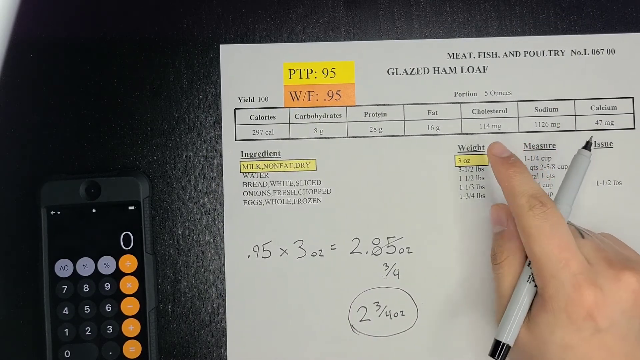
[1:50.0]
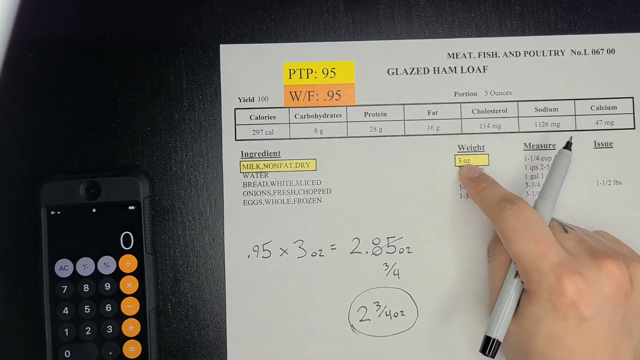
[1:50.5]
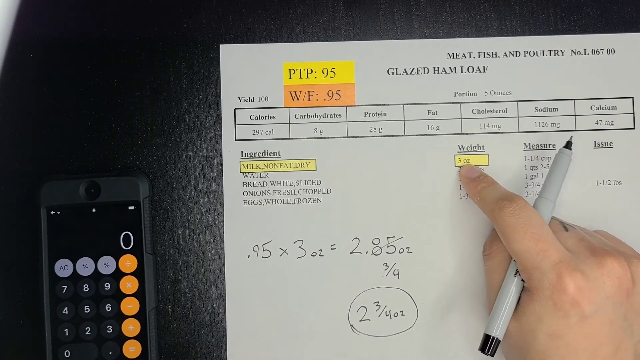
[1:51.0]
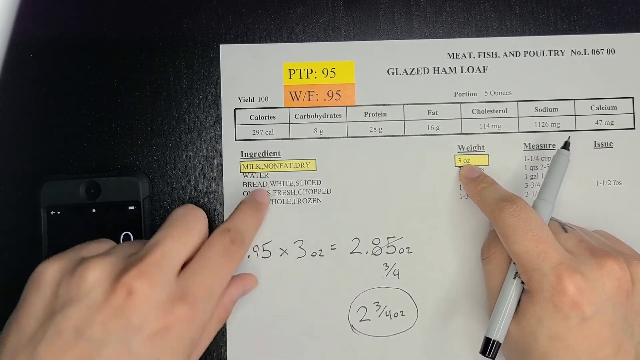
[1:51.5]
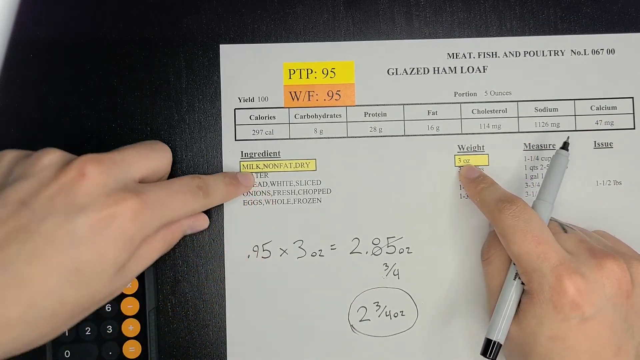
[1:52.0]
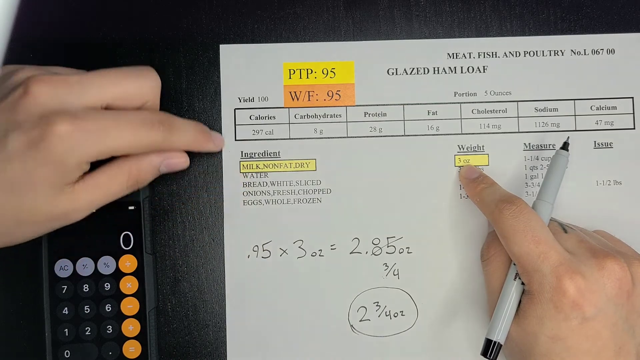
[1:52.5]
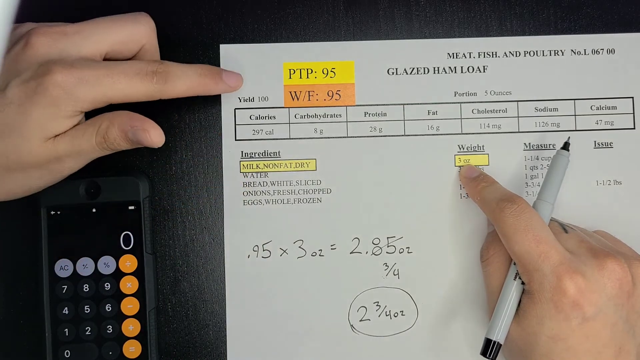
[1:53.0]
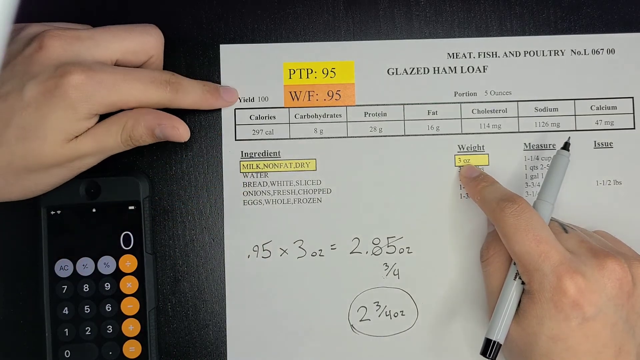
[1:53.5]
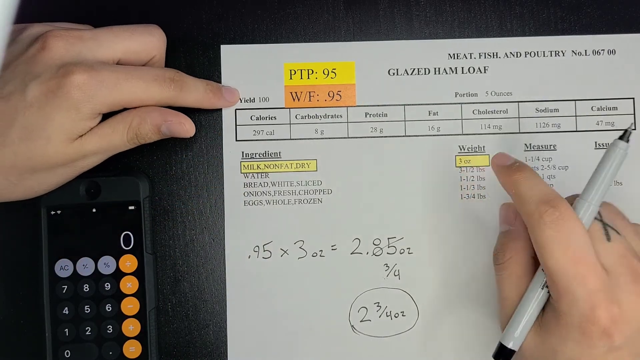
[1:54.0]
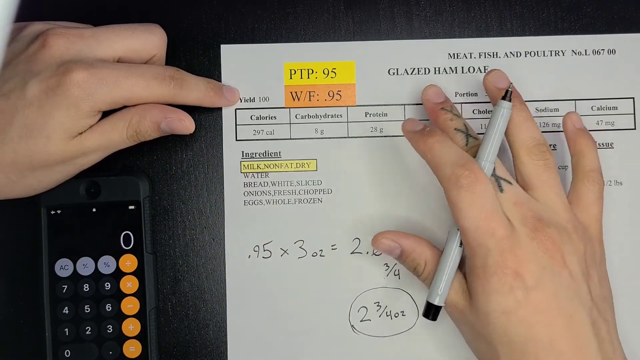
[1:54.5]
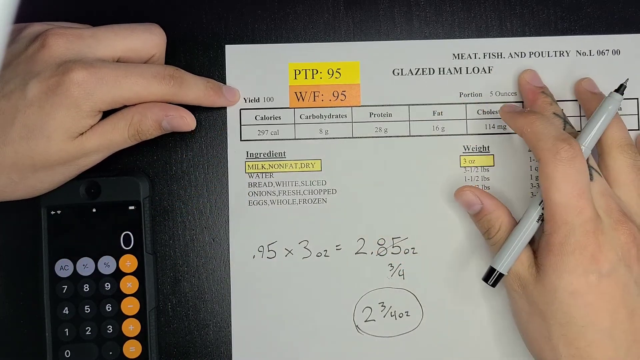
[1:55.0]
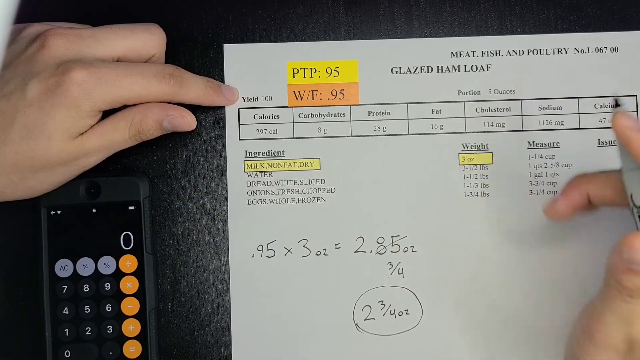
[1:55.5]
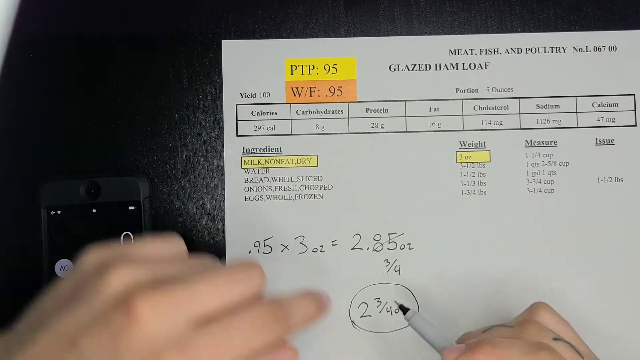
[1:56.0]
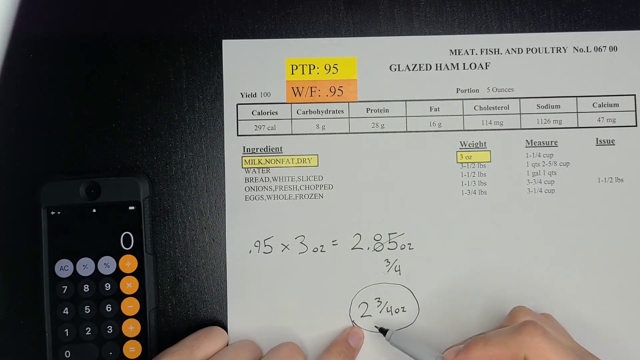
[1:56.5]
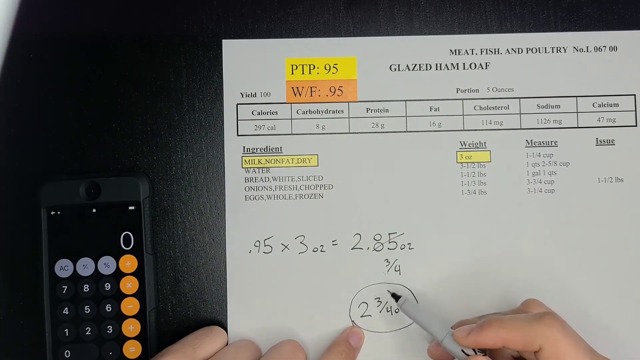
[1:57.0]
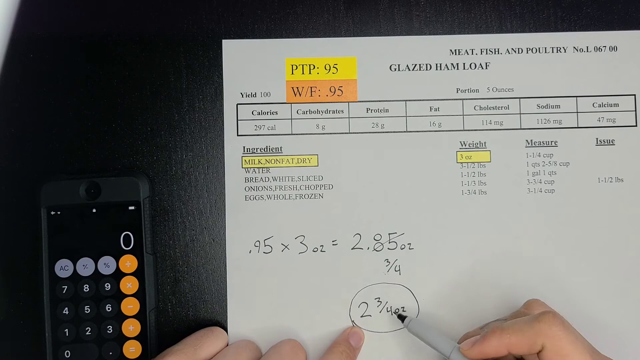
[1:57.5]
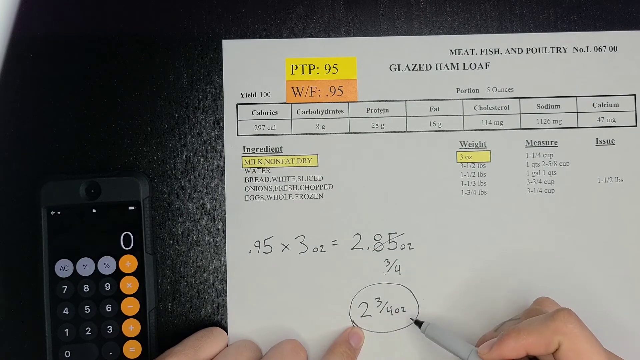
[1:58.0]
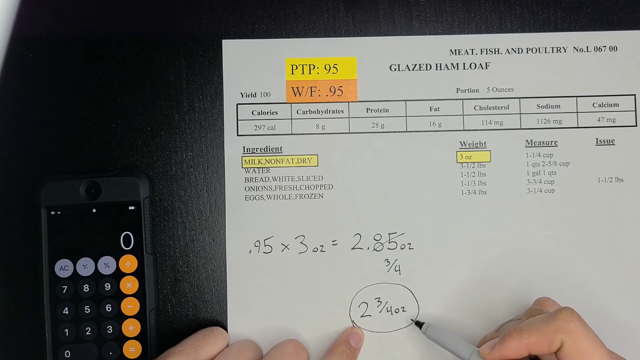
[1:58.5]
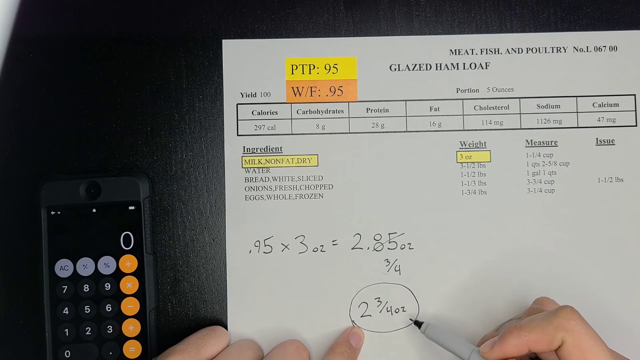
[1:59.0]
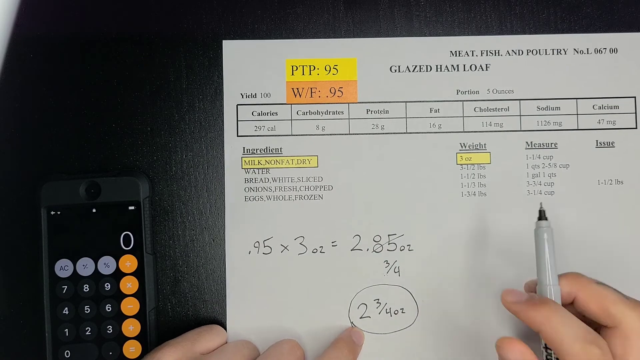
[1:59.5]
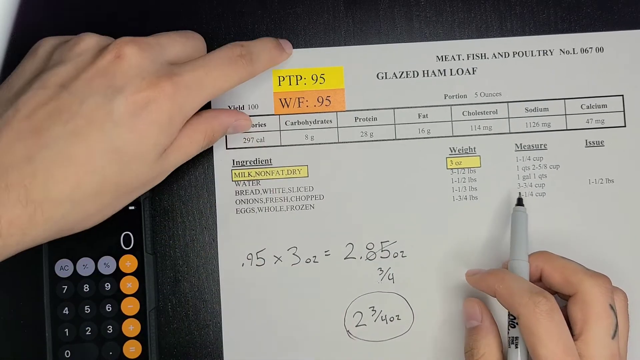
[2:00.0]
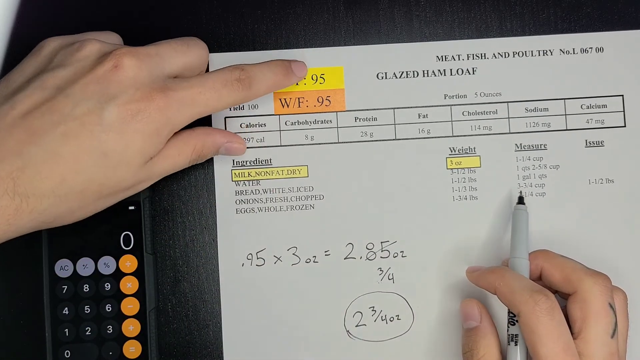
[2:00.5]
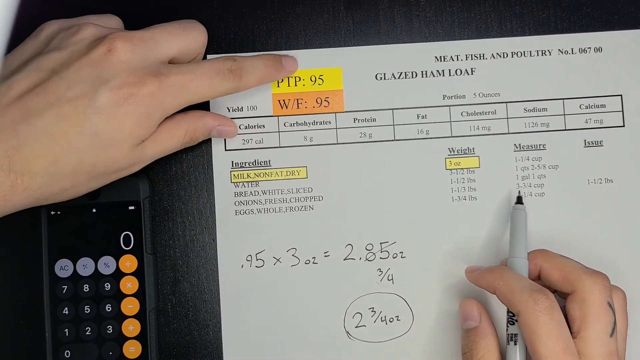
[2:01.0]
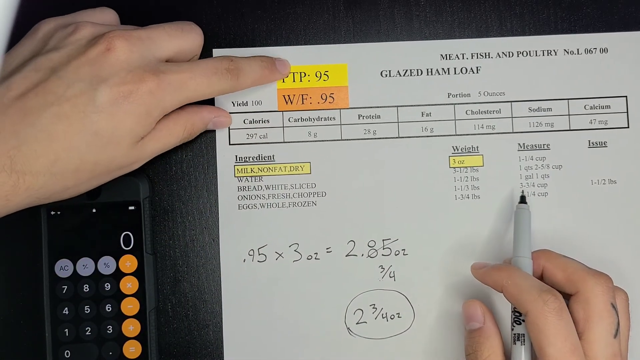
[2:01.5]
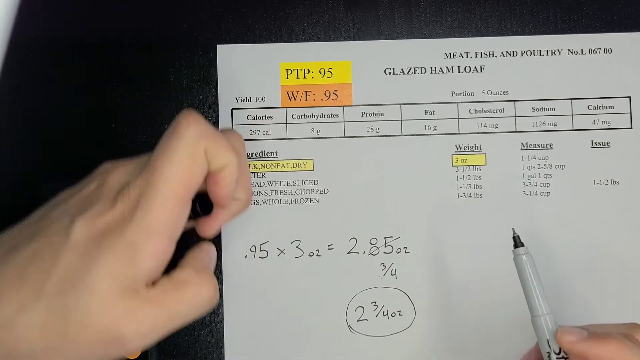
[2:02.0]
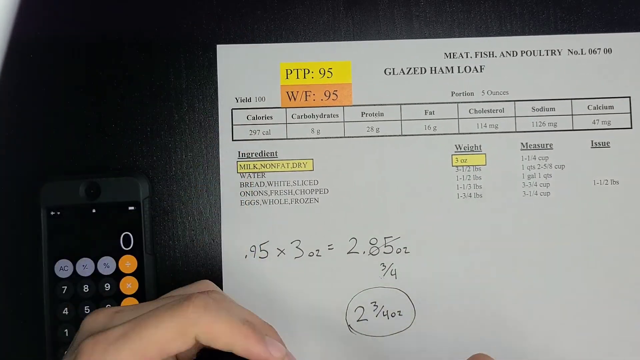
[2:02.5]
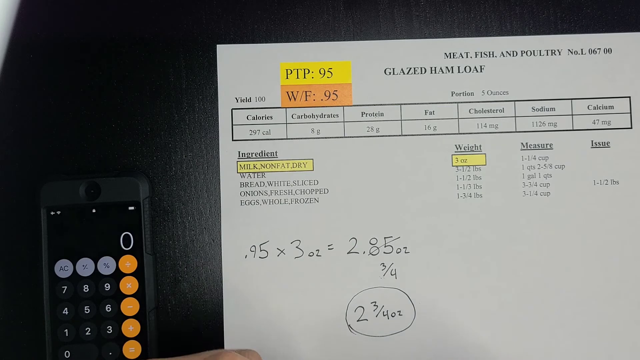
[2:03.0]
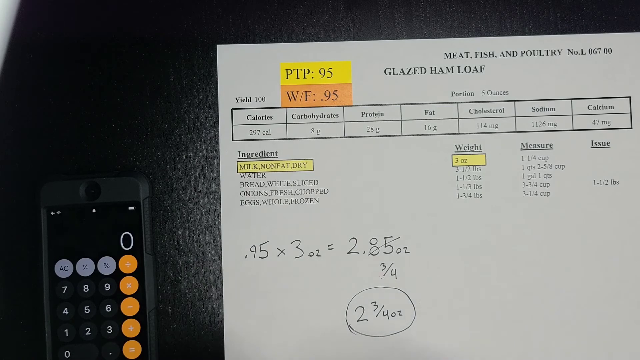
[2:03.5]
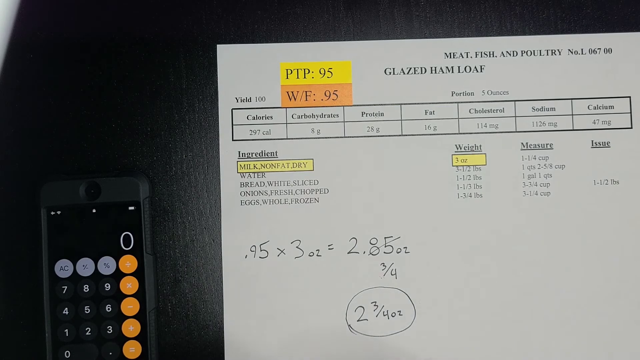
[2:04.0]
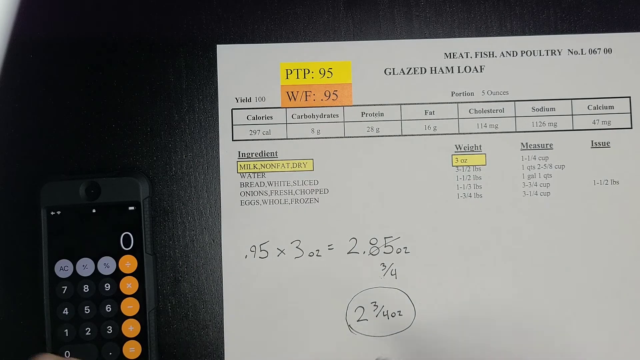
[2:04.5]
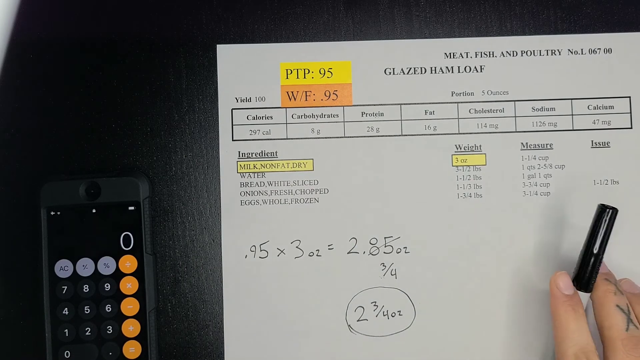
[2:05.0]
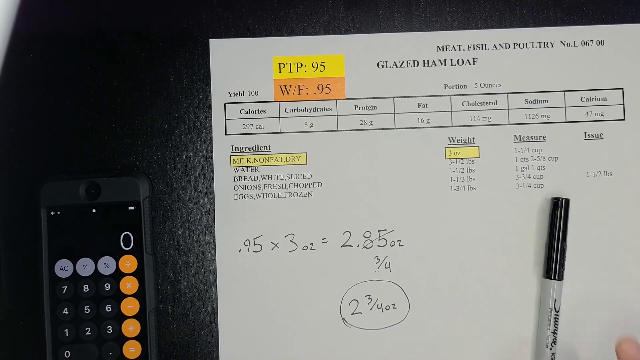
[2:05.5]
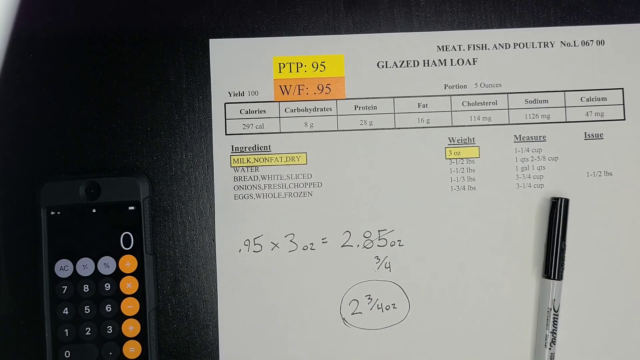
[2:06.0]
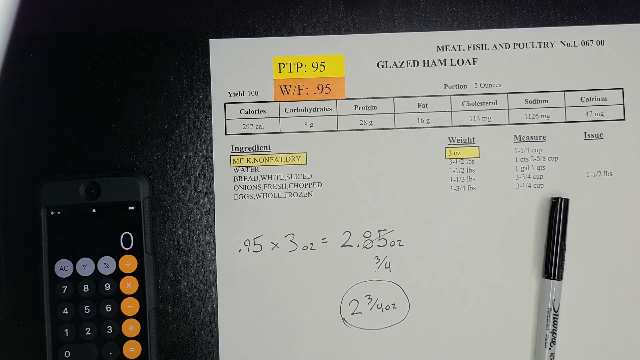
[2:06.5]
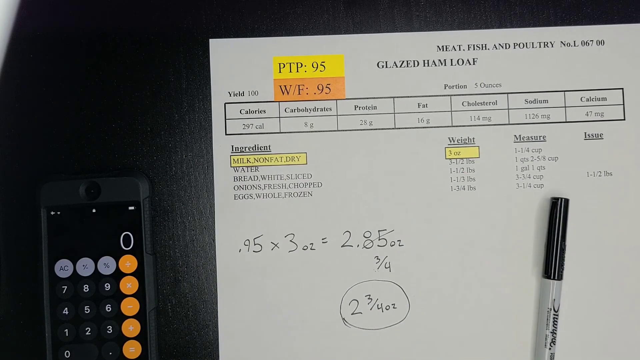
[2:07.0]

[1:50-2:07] Each ingredient is calculated on the calculator using the W/F of 0.9, and the resulting values are written down.